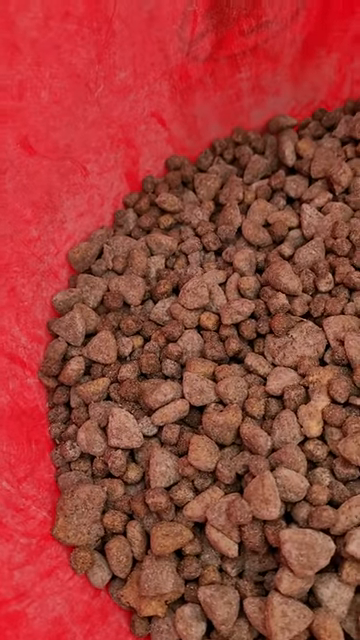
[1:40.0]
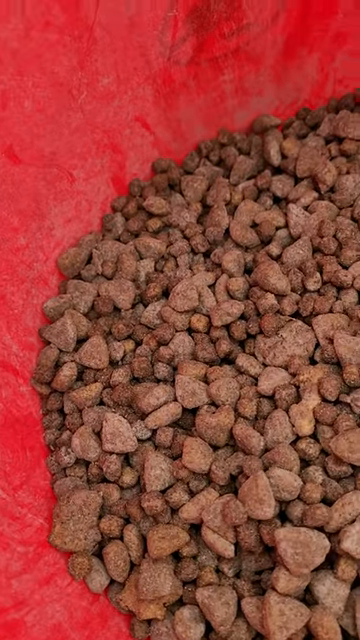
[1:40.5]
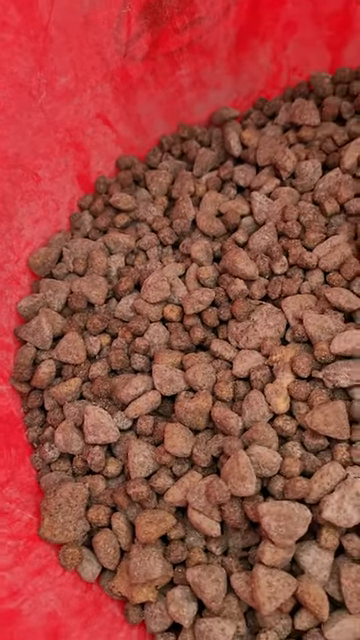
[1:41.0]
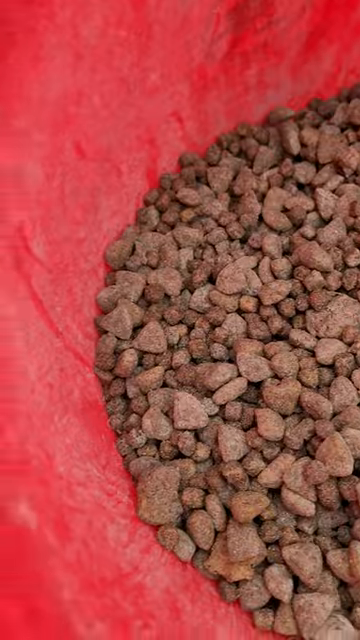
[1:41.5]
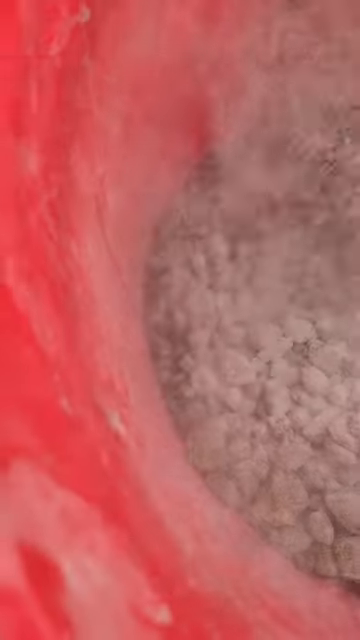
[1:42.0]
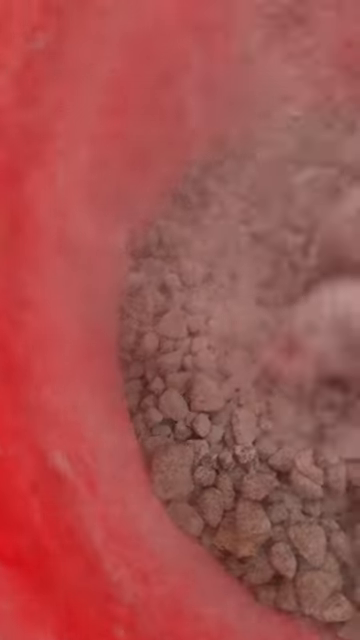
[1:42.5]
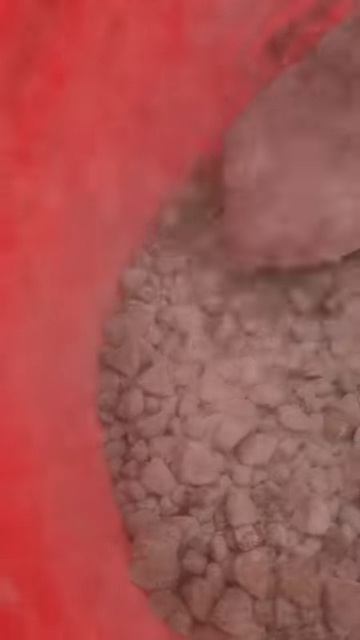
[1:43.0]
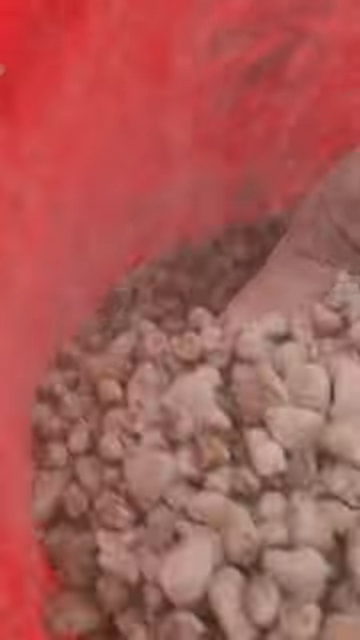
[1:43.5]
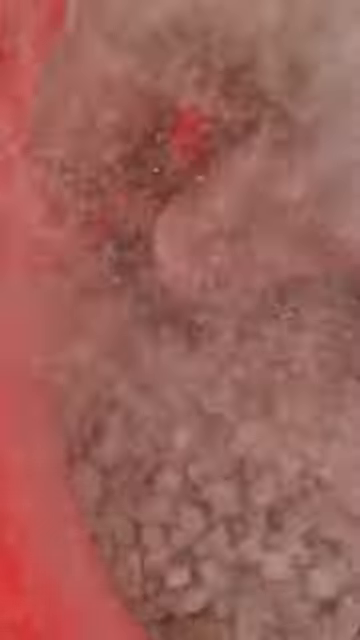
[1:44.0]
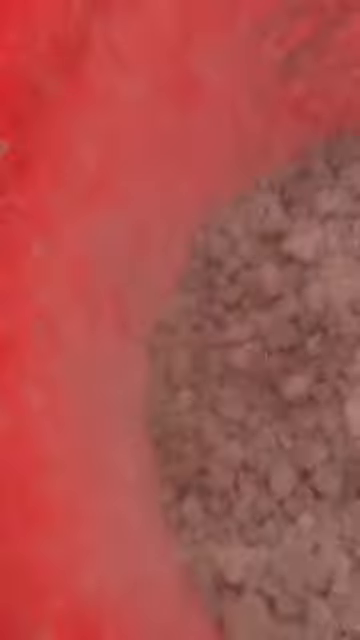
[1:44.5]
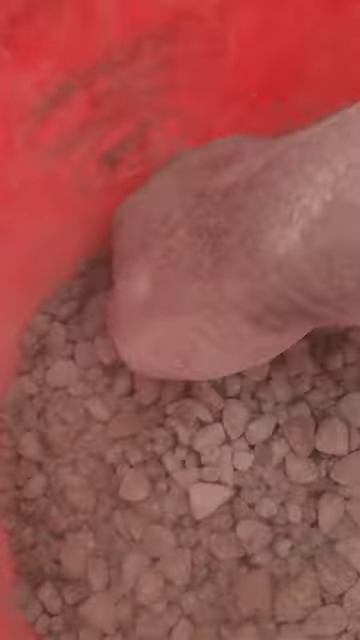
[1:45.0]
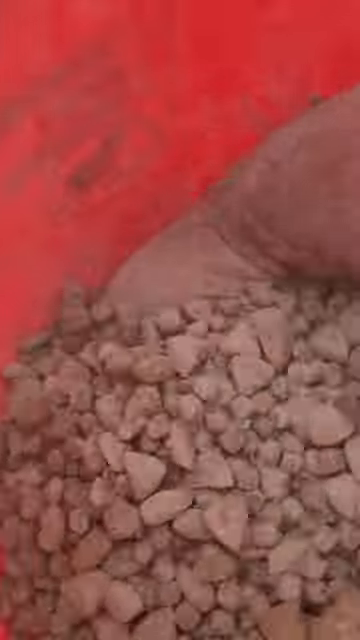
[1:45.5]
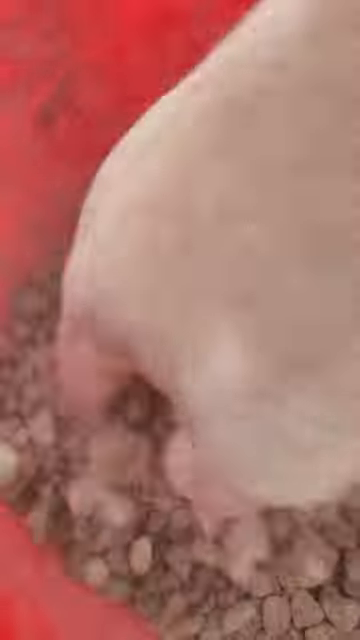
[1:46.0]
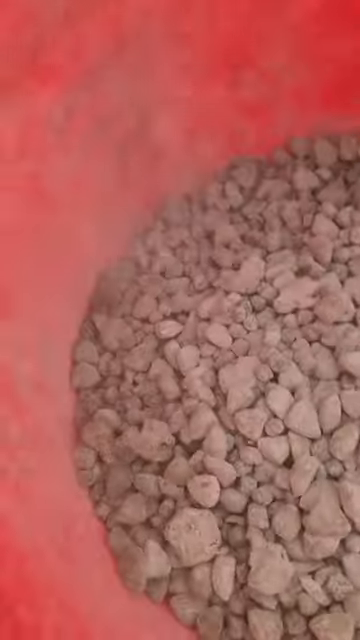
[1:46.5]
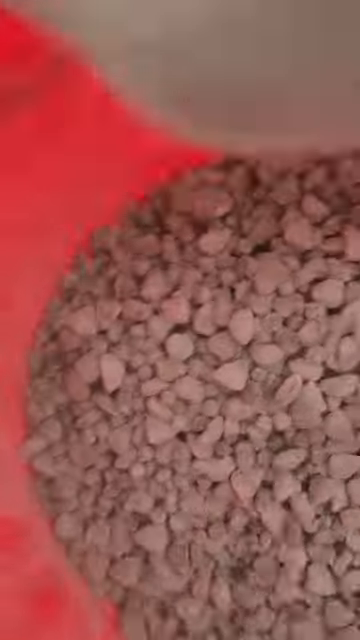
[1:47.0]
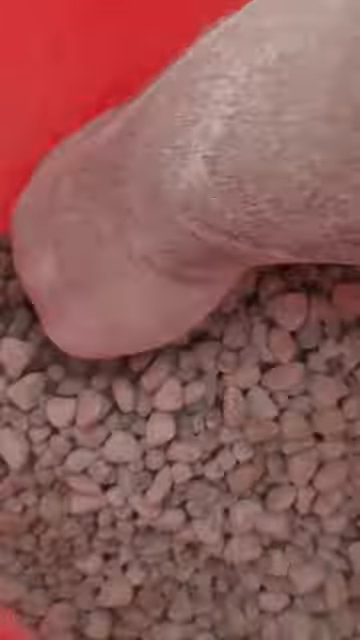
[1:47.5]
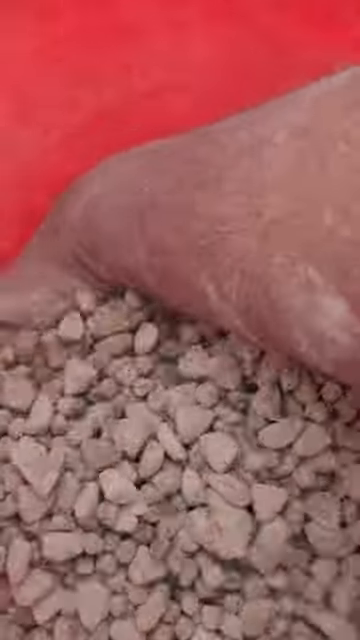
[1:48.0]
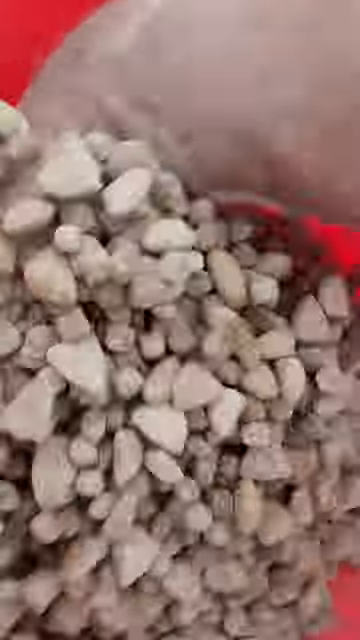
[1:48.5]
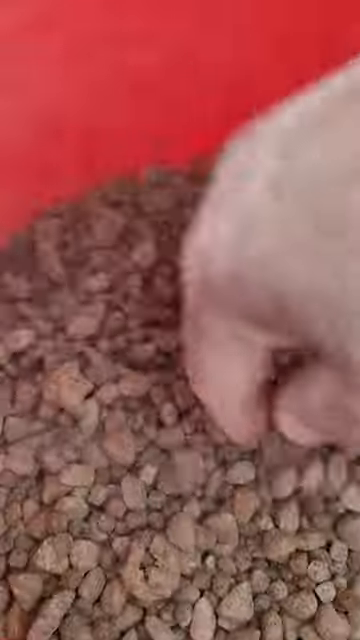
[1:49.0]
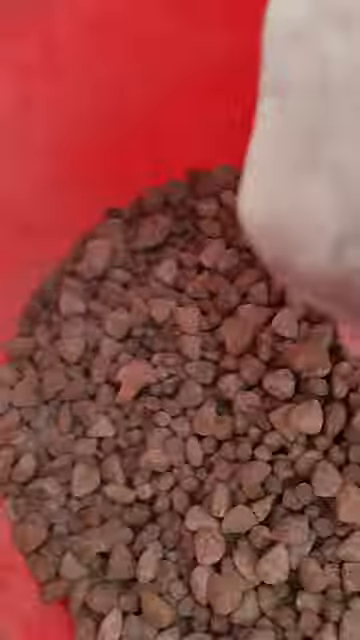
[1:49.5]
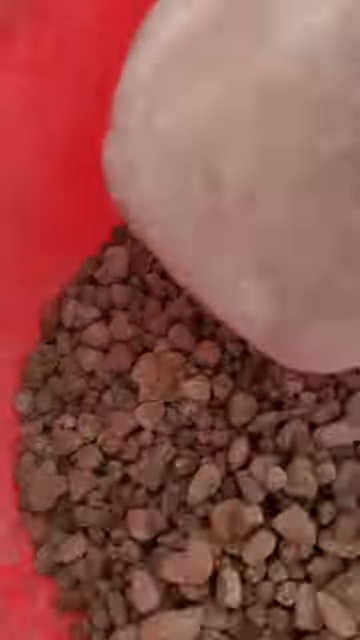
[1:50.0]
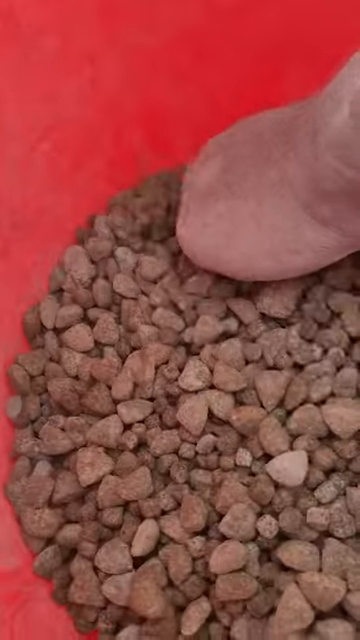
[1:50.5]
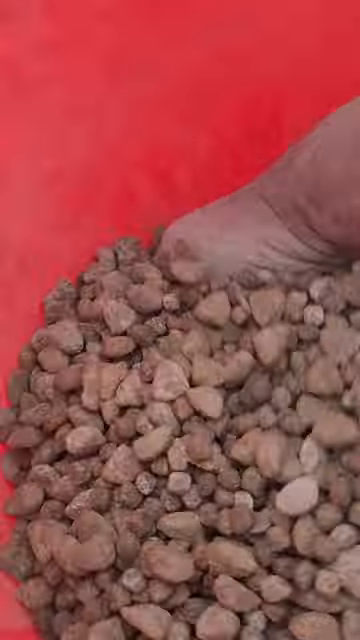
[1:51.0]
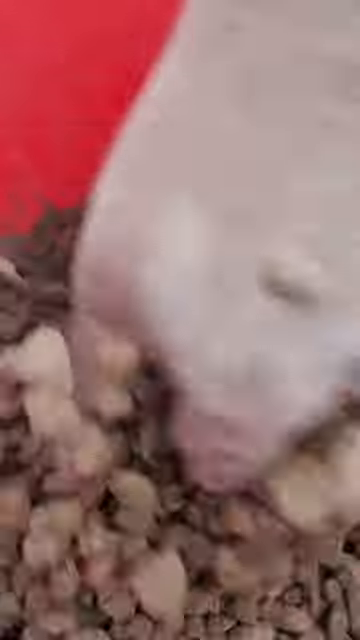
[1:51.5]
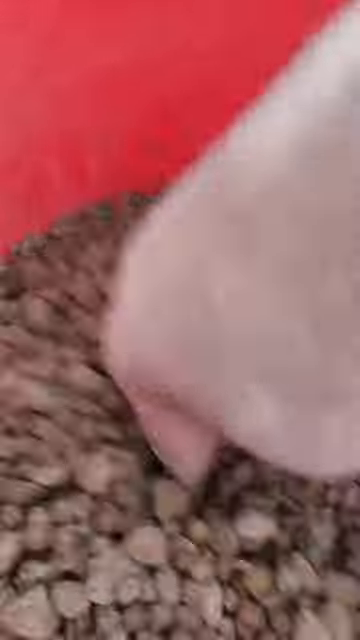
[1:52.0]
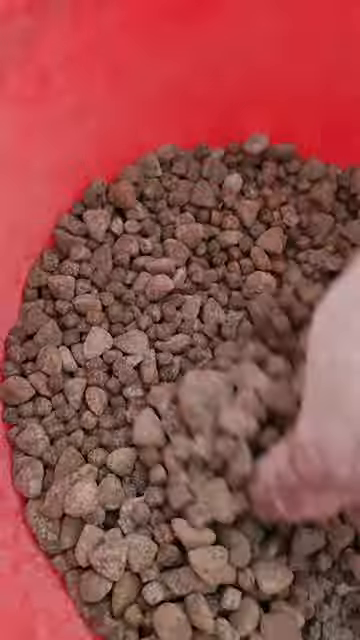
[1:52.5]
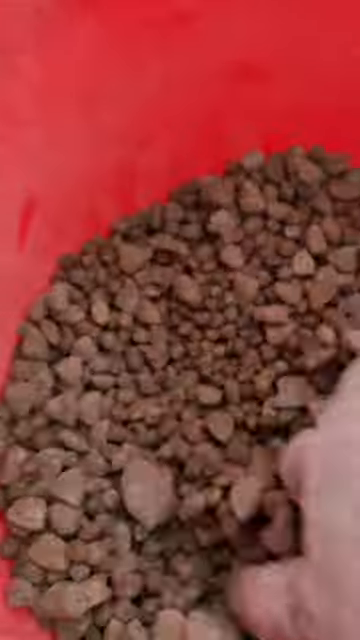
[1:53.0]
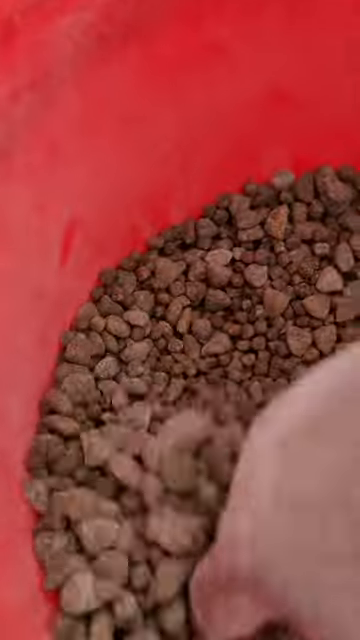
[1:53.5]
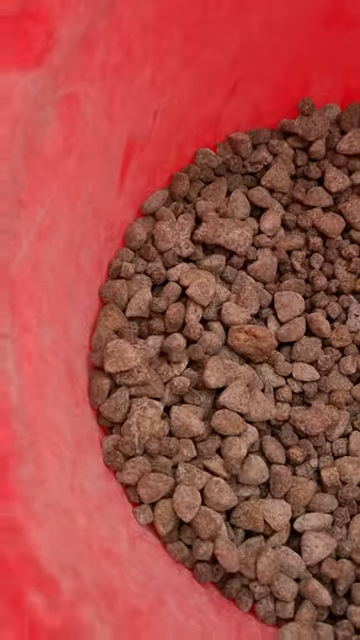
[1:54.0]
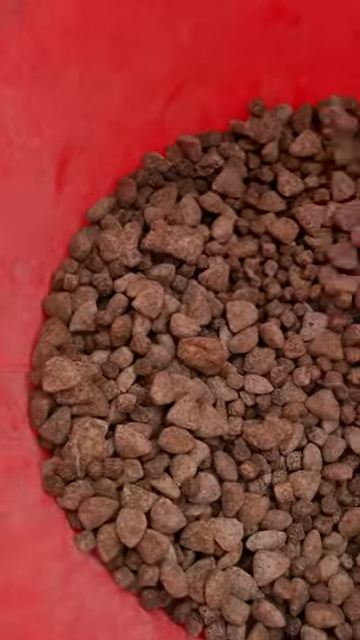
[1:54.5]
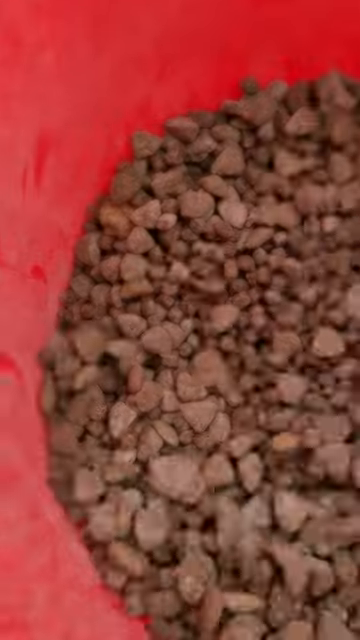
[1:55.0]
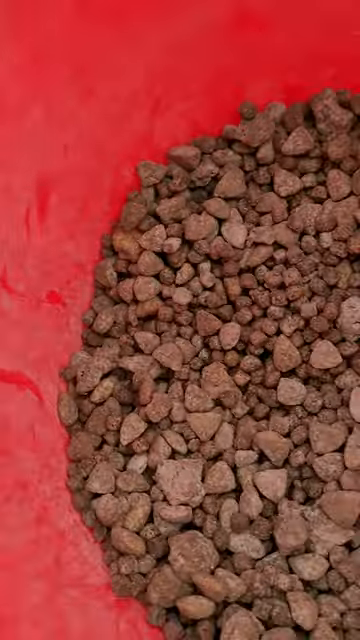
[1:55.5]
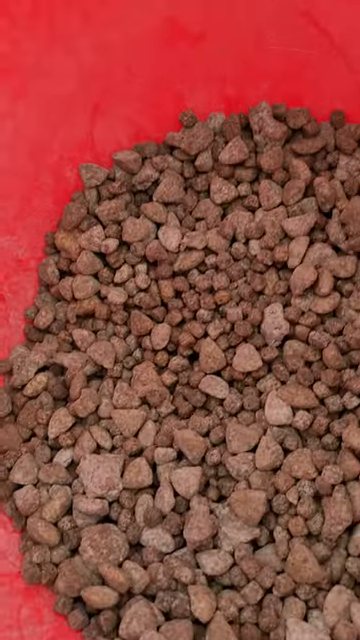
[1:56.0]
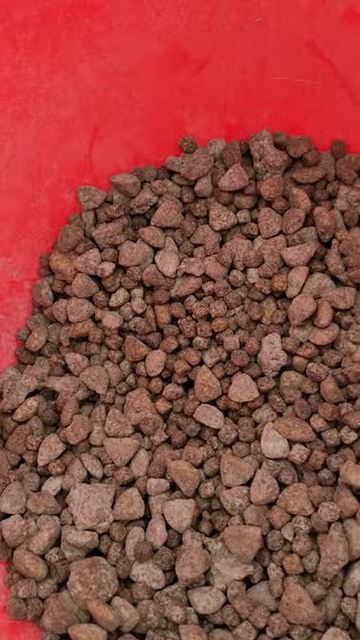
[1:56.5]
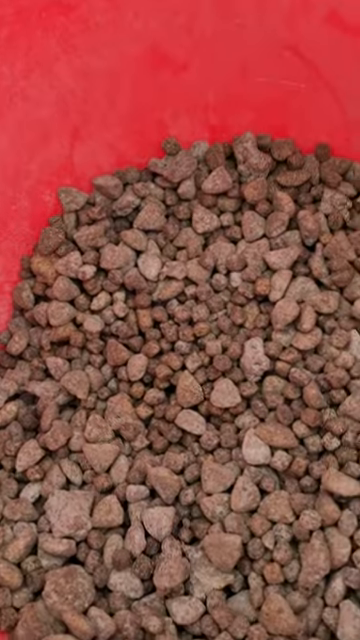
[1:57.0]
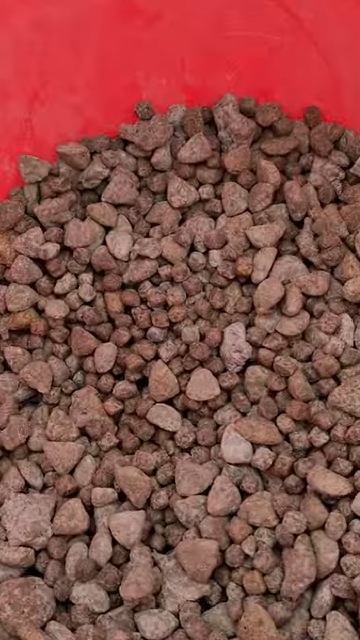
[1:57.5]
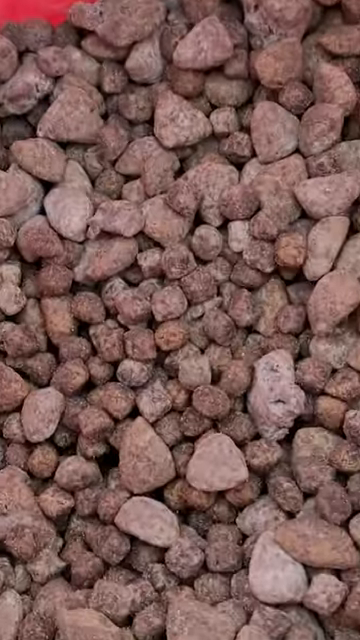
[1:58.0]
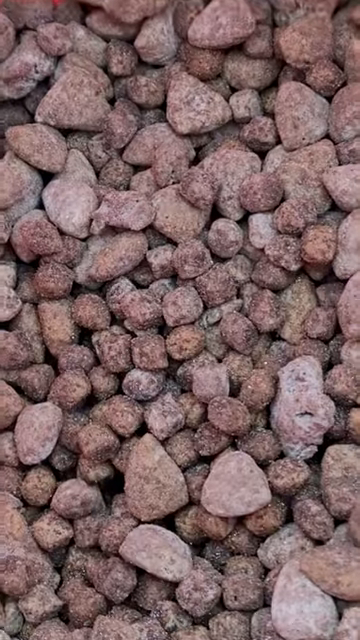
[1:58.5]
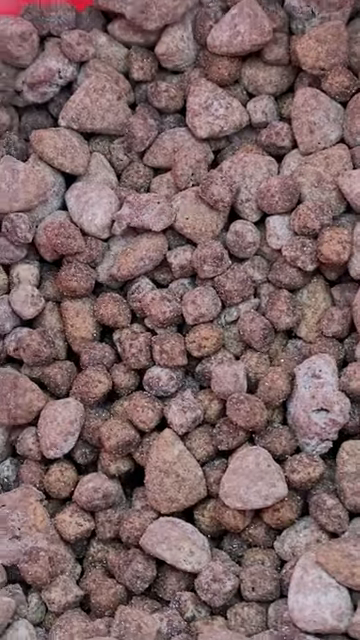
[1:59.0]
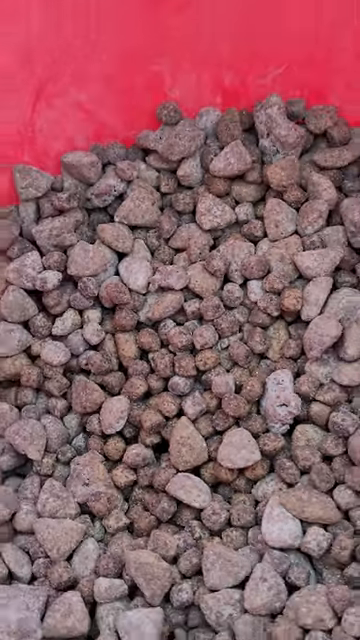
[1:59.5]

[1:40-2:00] A close-up shows the brown food mixed with the white powder inside the red bucket. The owner seems to have just sprinkled some more powder in and continues mixing the food with his hand. The bucket looks about a quarter filled with the mixture. The owner sticks his hand deep toward the bottom of the bucket, scooping the food from the bottom and mixing it all around. The inside of the bucket has a light, powdery coat, though it is still red. The owner then zooms in far on the food mixture, which looks like little stones in a mix of gray-brown, light gray and a little tan.